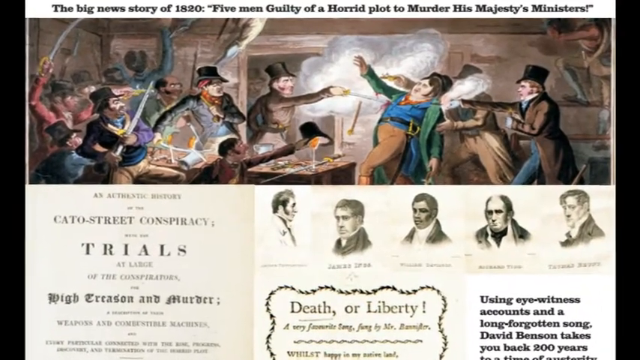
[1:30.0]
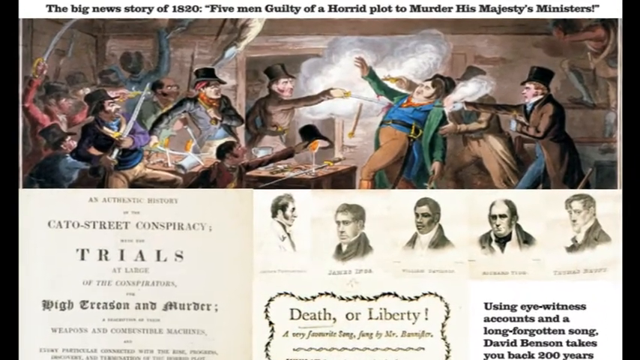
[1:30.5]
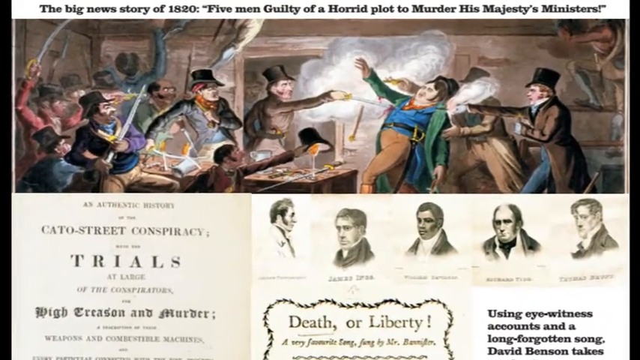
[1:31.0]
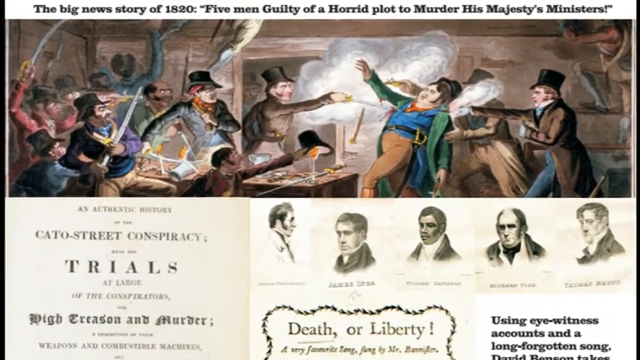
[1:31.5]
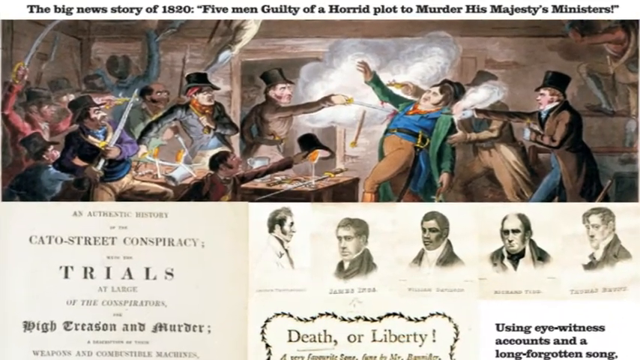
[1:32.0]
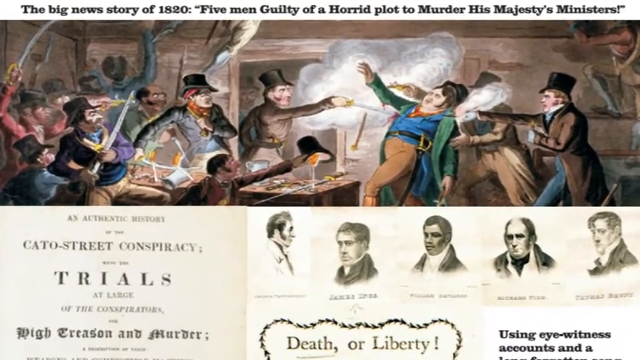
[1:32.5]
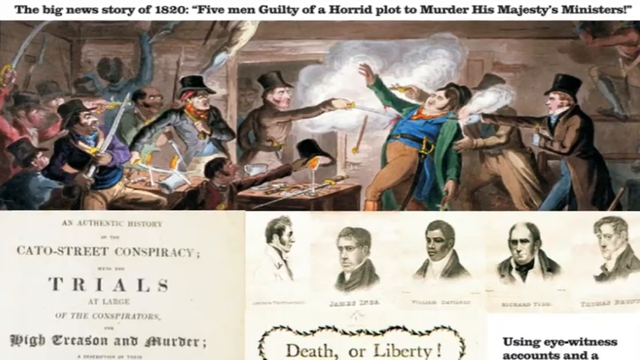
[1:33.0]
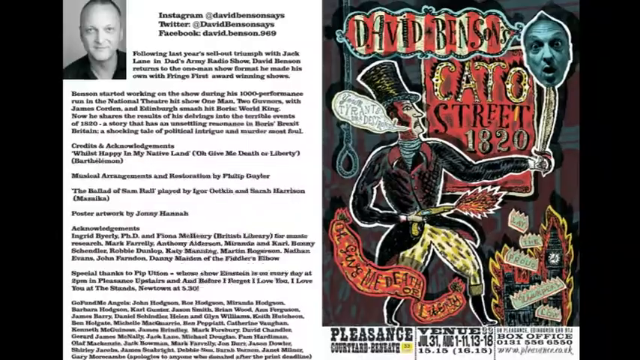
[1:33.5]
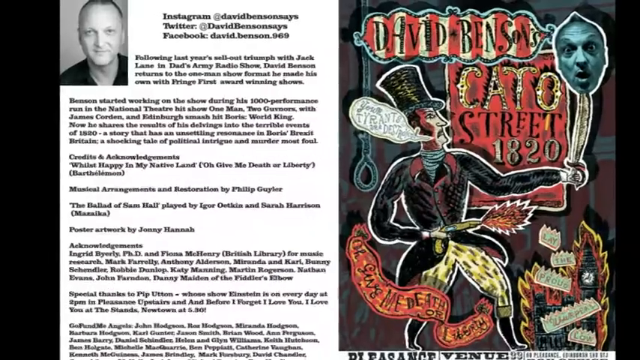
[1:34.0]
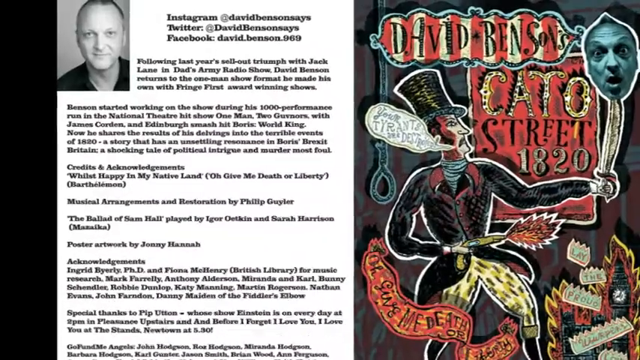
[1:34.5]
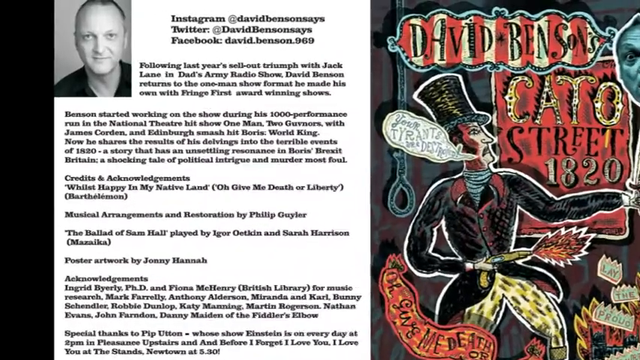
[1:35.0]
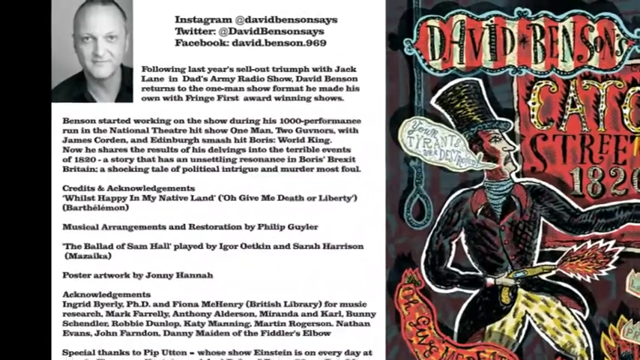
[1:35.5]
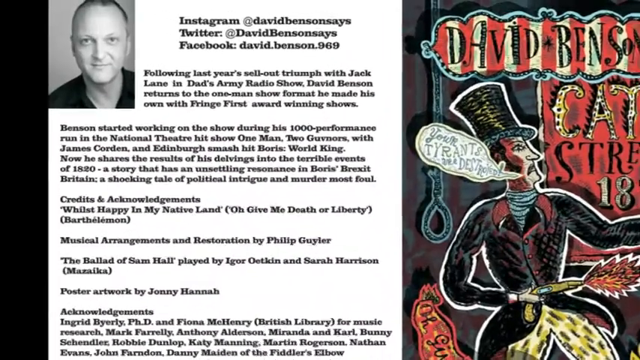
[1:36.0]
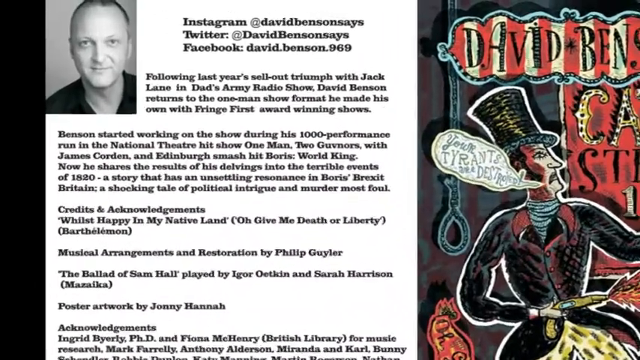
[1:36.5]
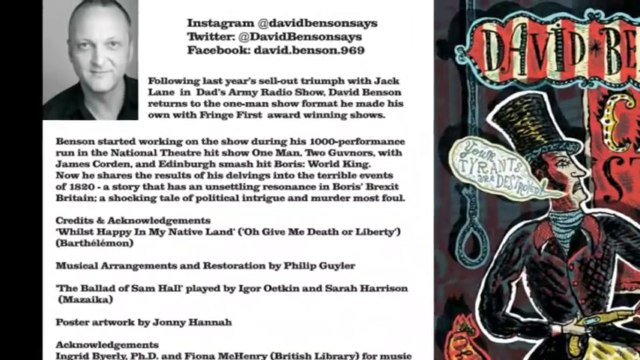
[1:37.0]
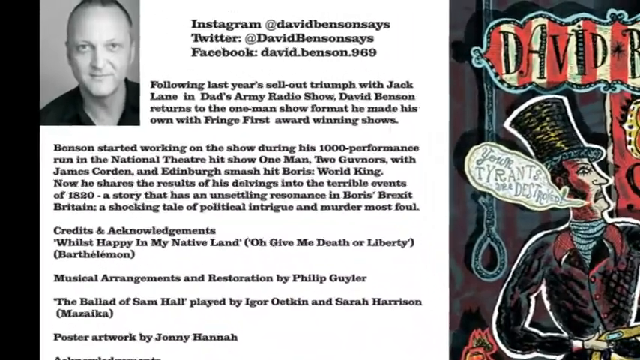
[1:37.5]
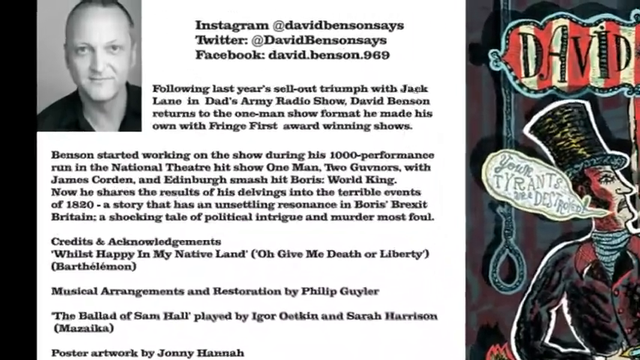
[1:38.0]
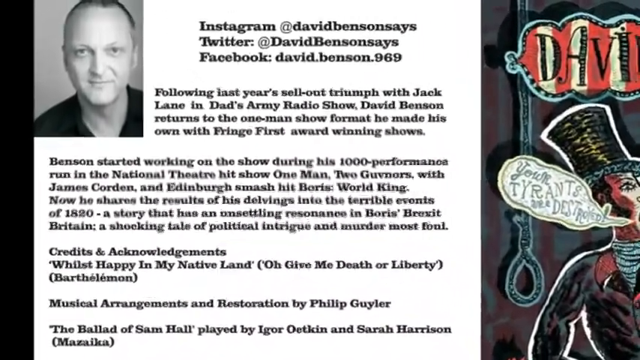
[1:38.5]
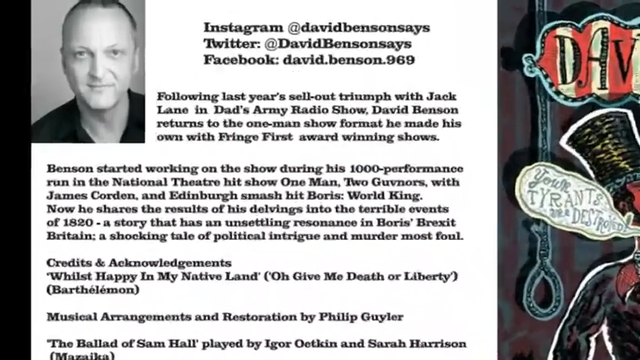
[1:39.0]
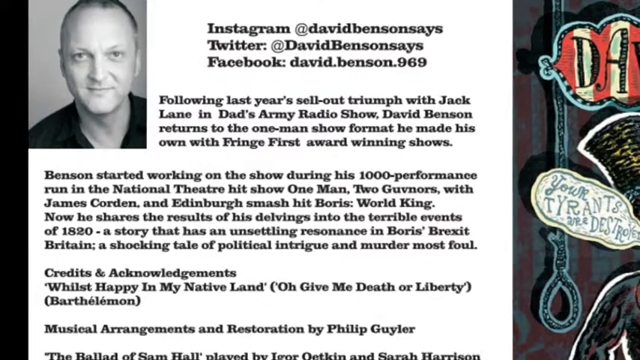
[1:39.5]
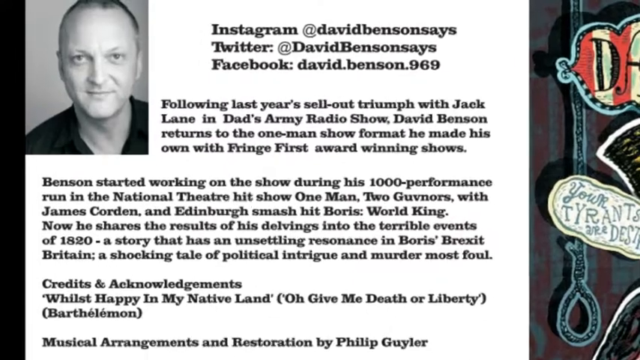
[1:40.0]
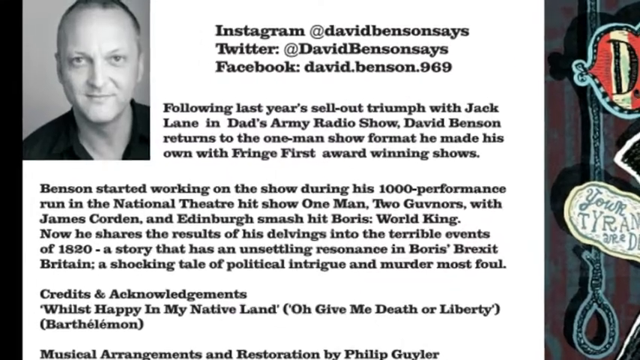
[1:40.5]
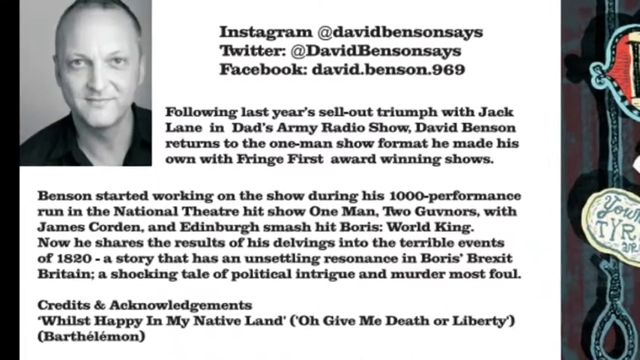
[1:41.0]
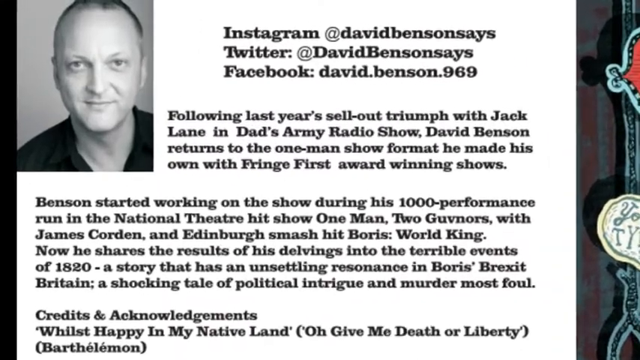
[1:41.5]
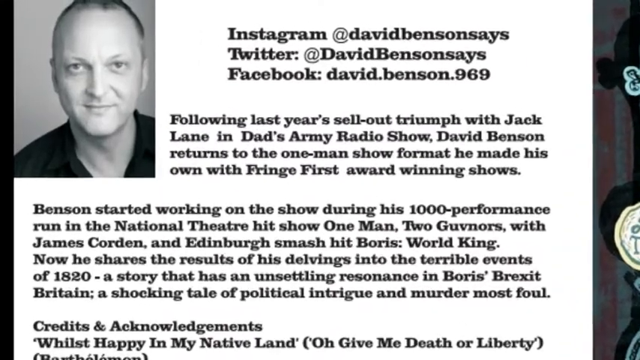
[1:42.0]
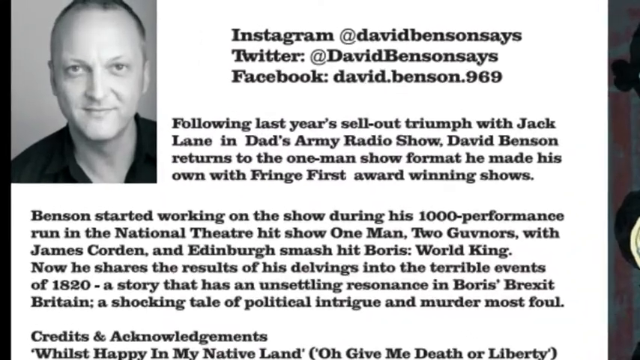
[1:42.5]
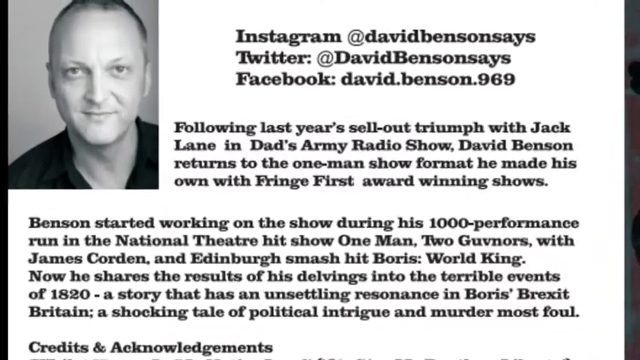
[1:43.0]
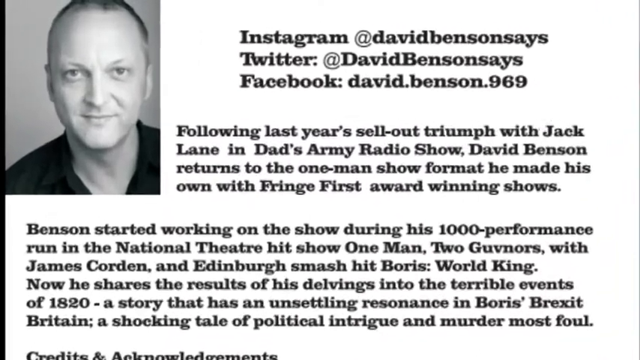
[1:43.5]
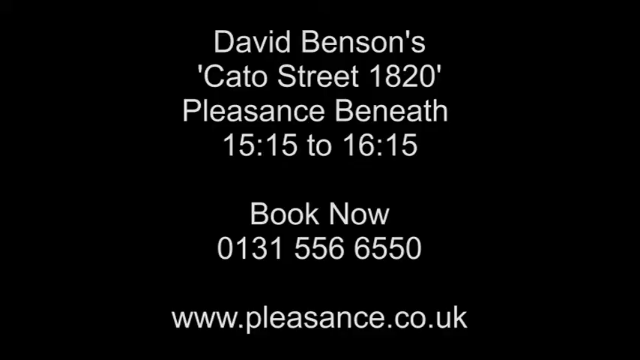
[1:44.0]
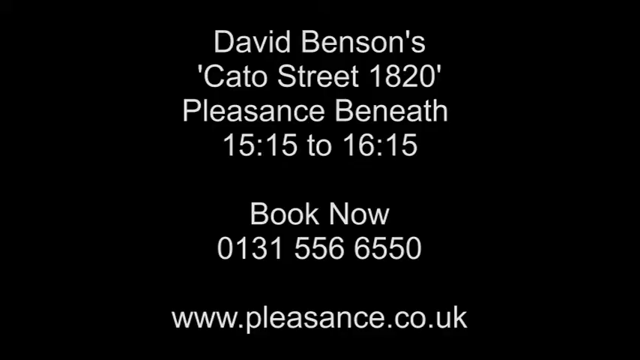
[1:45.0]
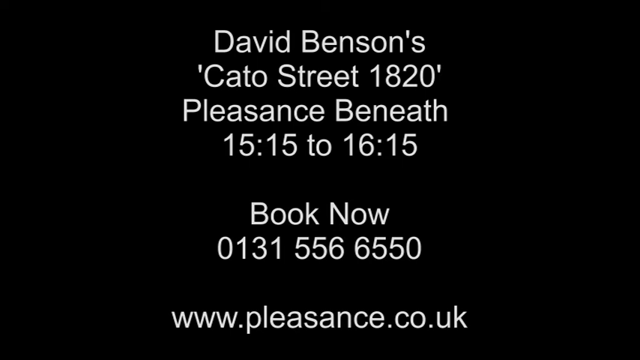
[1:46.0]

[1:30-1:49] The same drawing appears, showing a group of men holding weapons, some of them guns. On the right are three white men; one of them, in a green jacket, is getting stabbed. The two men behind him are pointing towards the people on the left and appear to be holding guns. A lot of white smoke is between the men, separating them. On the left are more men, apparently about nine in total. The middle man is the one doing the stabbing; he has a black top hat and a brown jacket, while some of the men behind him are wielding swords and some are holding hats. On the bottom half, text underneath the picture is about the trials and the Cato Street Conspiracy, with five drawings of five different men at the bottom right. The camera zooms in on the drawing, and the scene changes to a picture of David Benson's face at the top left with his social media platforms on the right: Instagram, Twitter, and Facebook. Finally, a black screen with white text reads "David Benson's Cato Street 1820 Pleasance Beneath 1515-1615 Book Now".